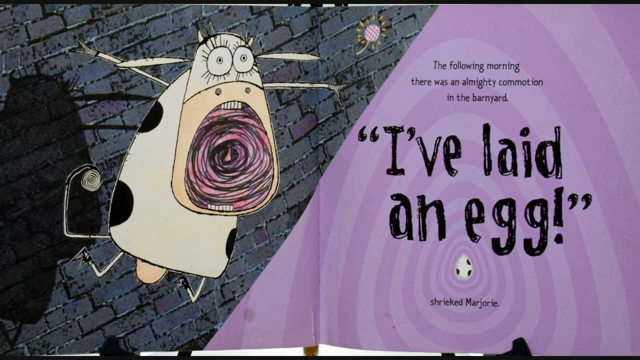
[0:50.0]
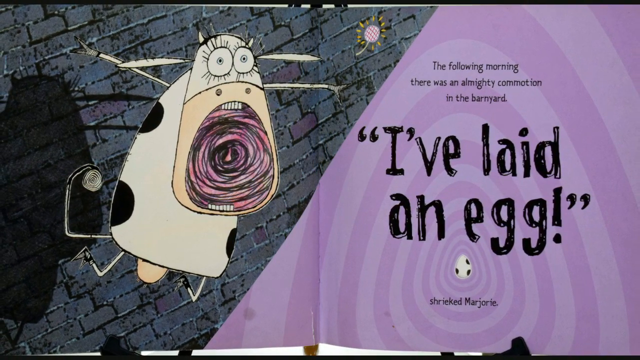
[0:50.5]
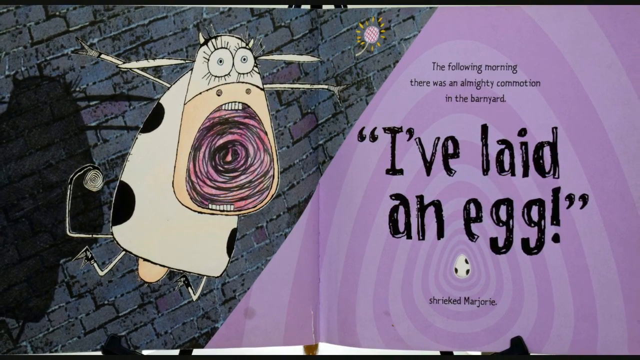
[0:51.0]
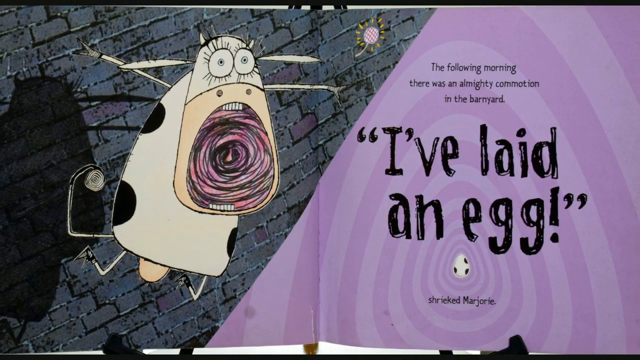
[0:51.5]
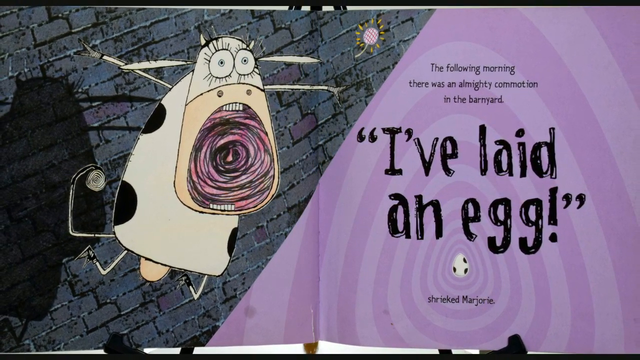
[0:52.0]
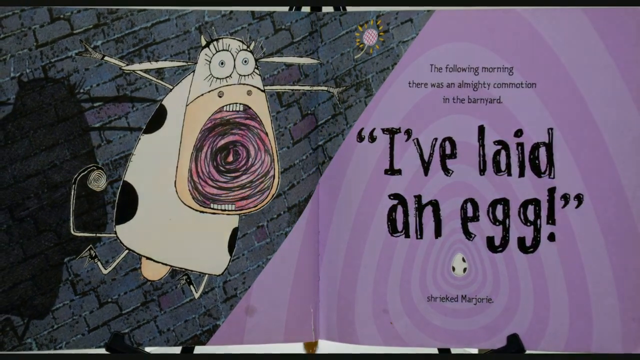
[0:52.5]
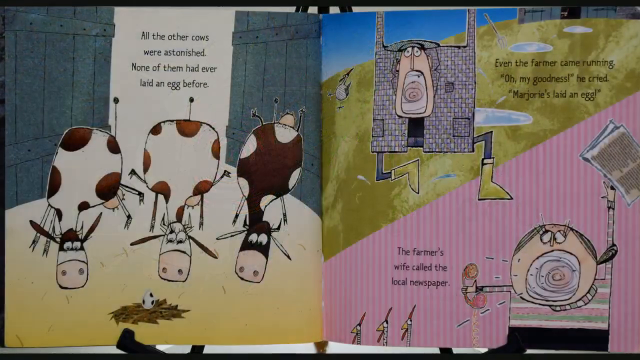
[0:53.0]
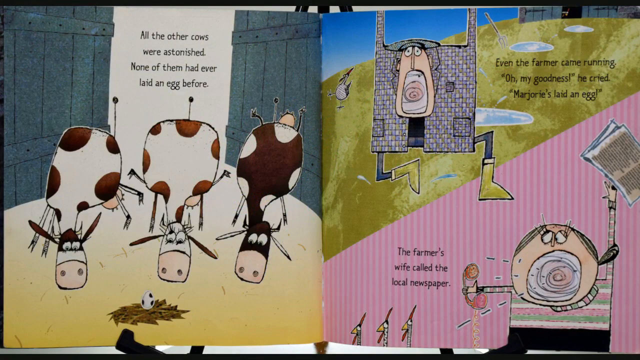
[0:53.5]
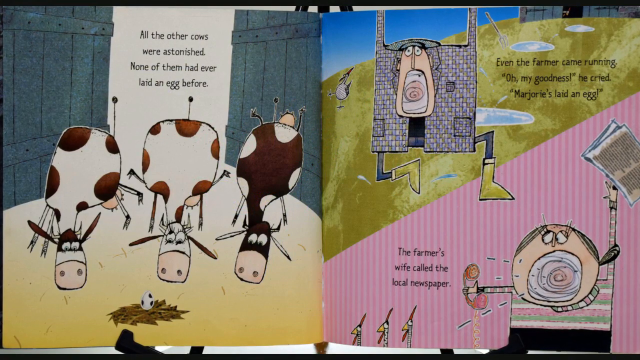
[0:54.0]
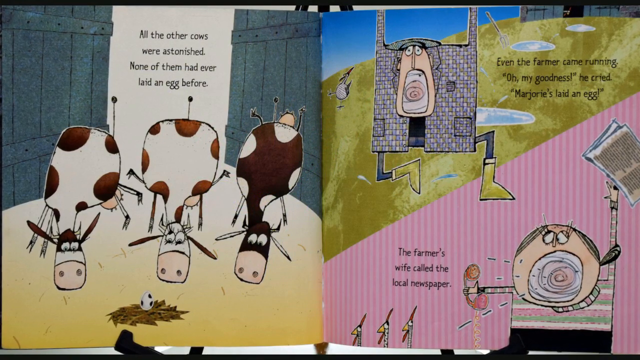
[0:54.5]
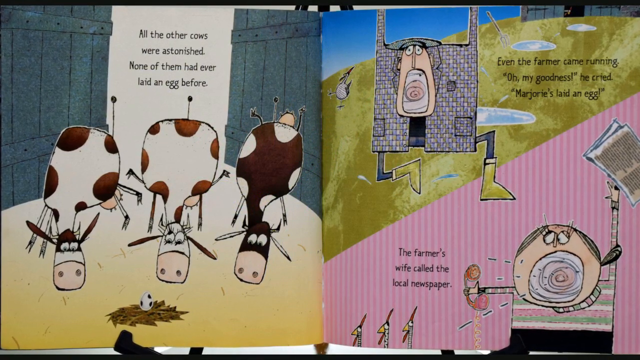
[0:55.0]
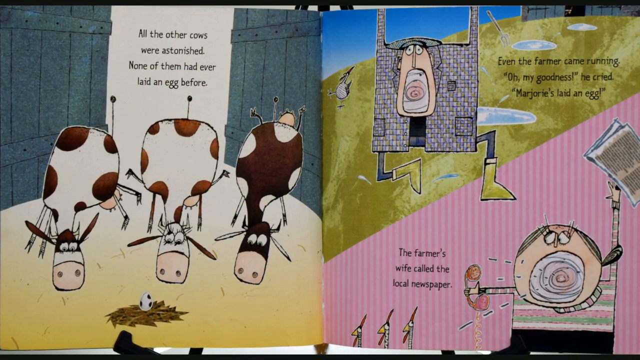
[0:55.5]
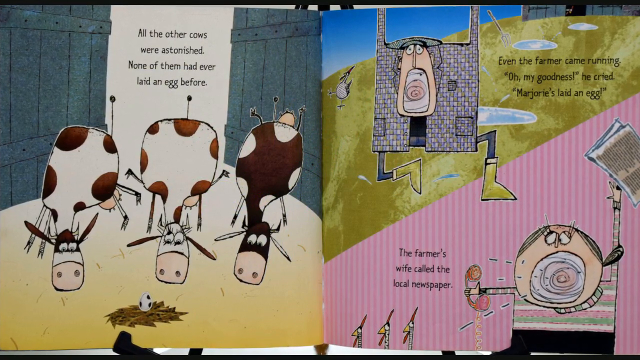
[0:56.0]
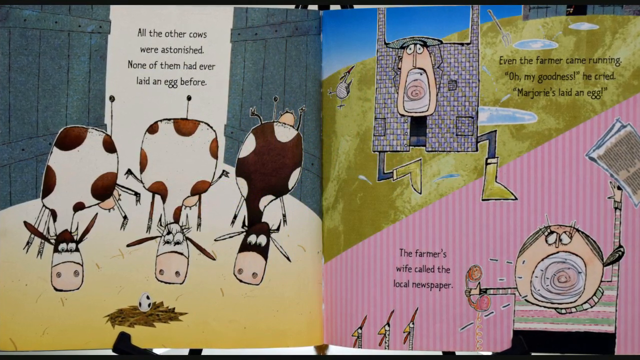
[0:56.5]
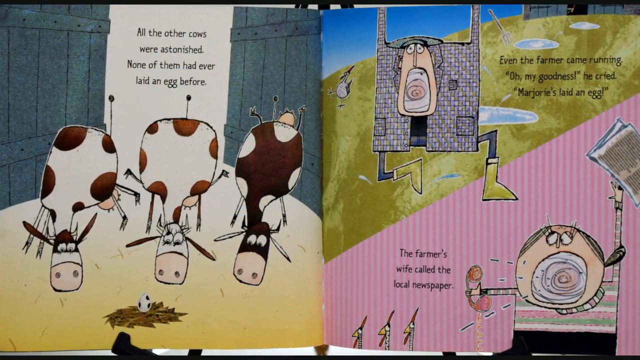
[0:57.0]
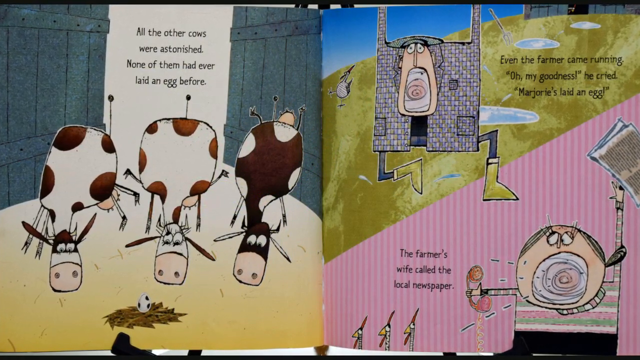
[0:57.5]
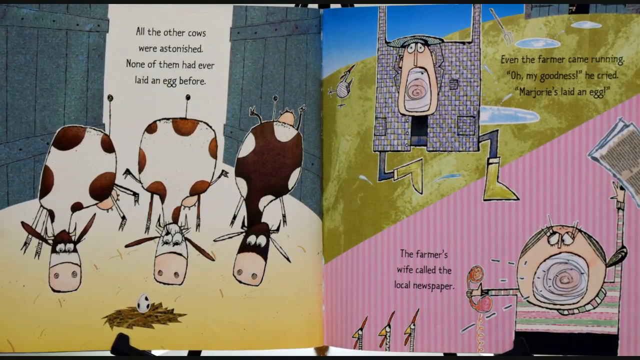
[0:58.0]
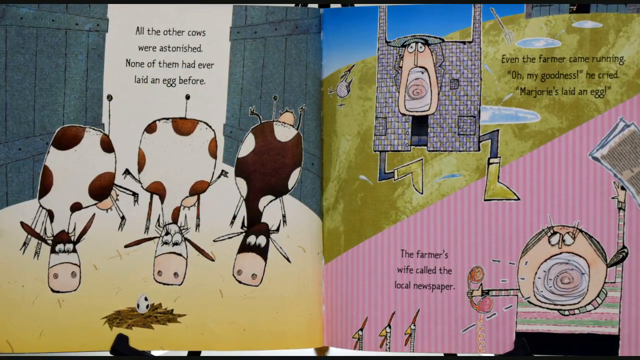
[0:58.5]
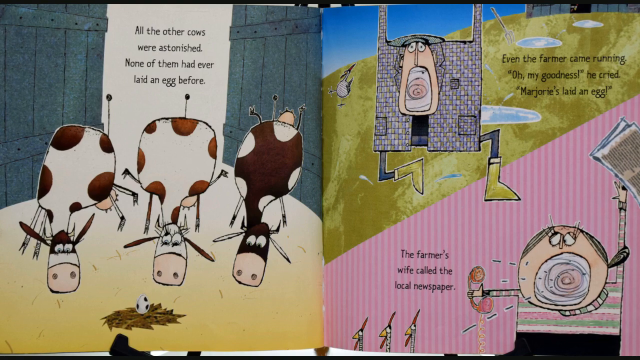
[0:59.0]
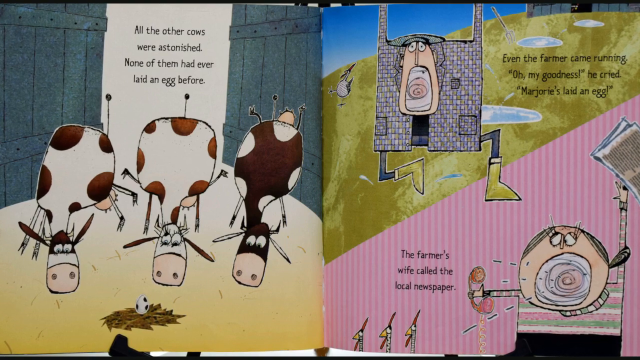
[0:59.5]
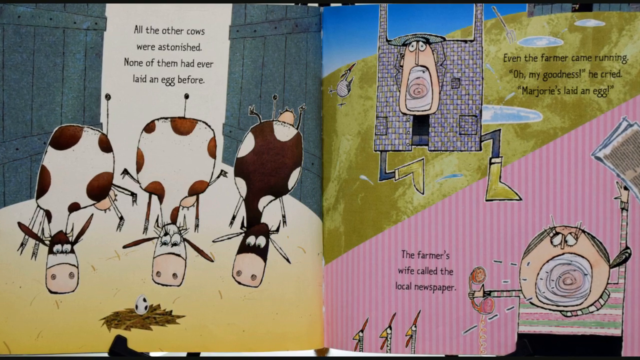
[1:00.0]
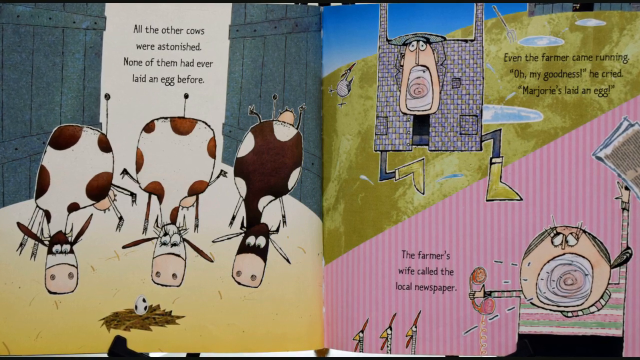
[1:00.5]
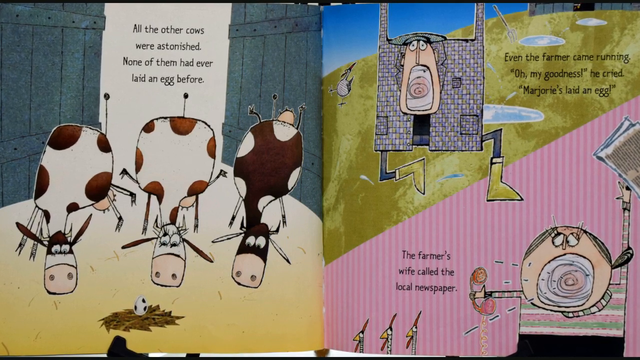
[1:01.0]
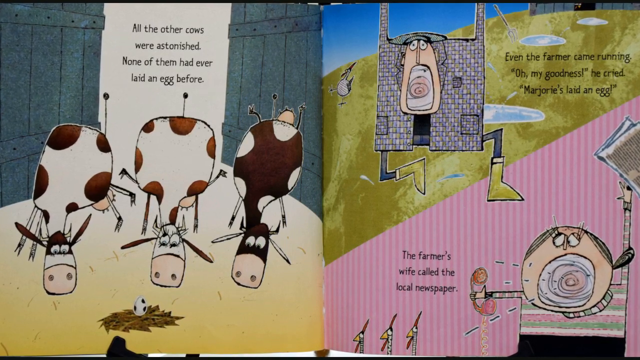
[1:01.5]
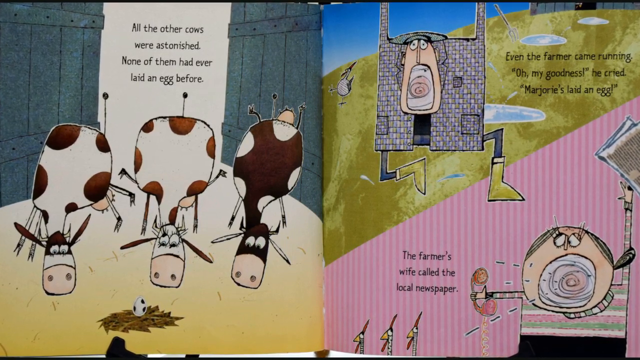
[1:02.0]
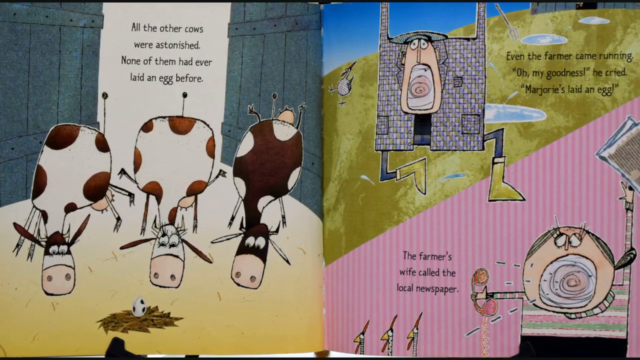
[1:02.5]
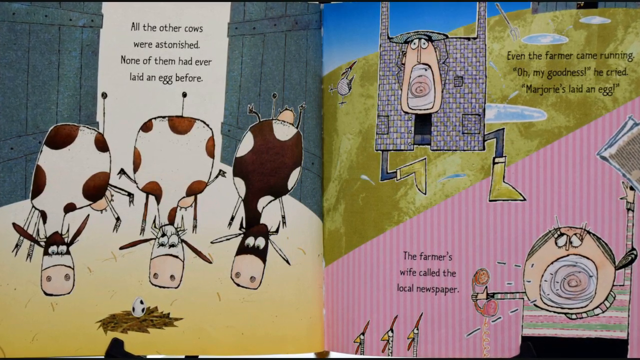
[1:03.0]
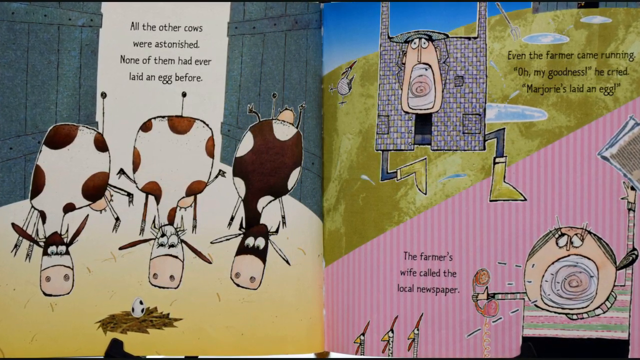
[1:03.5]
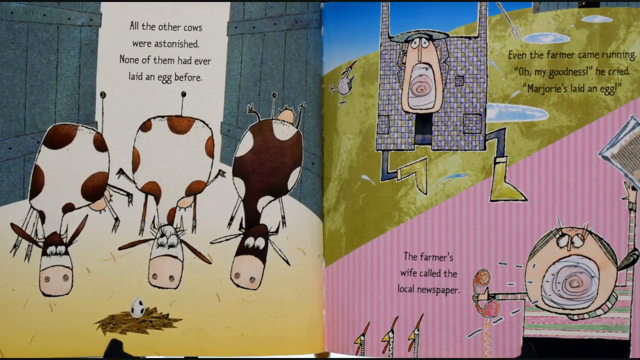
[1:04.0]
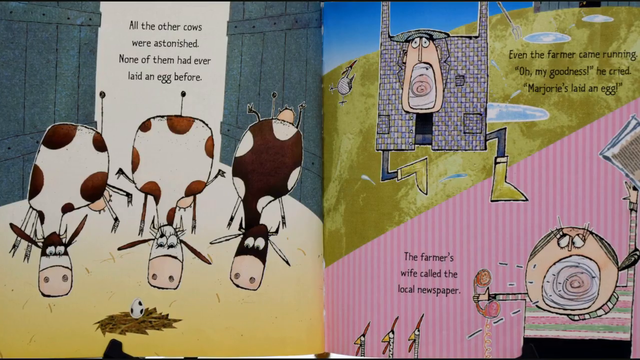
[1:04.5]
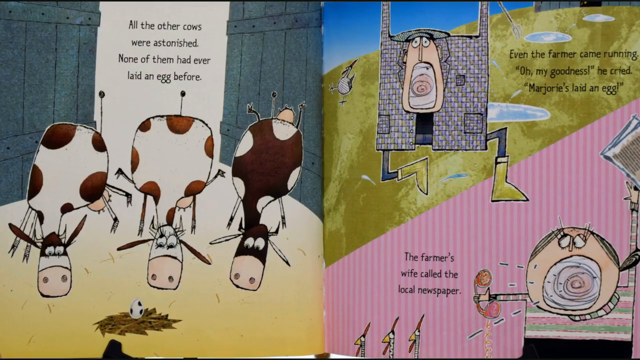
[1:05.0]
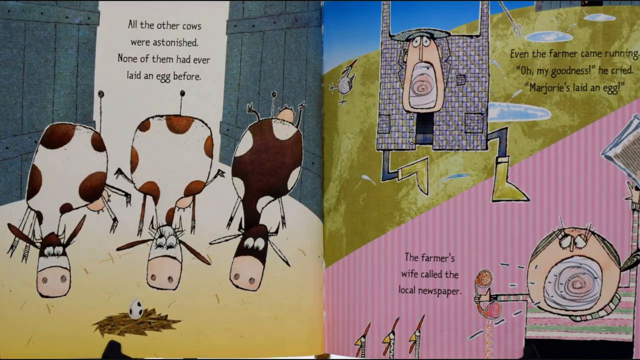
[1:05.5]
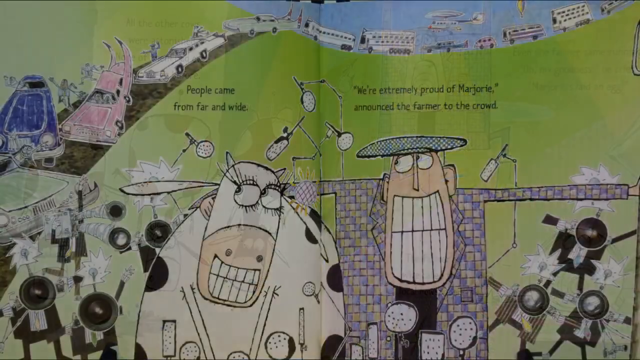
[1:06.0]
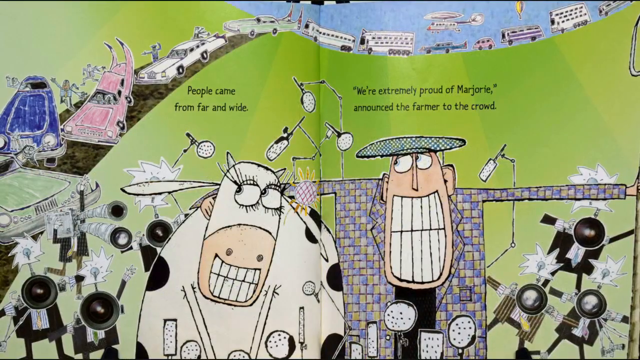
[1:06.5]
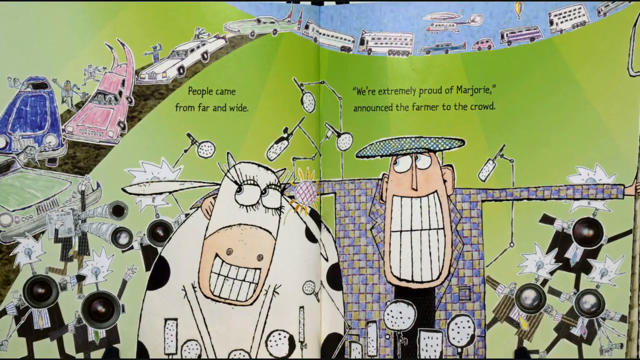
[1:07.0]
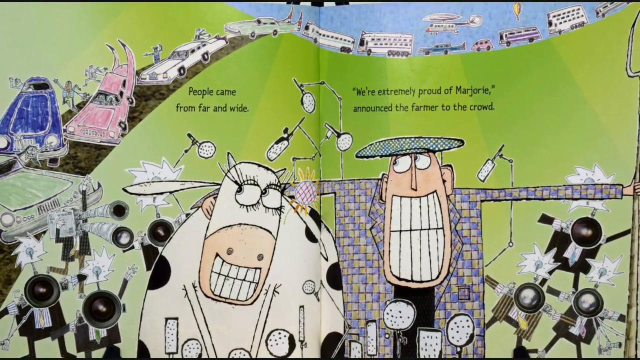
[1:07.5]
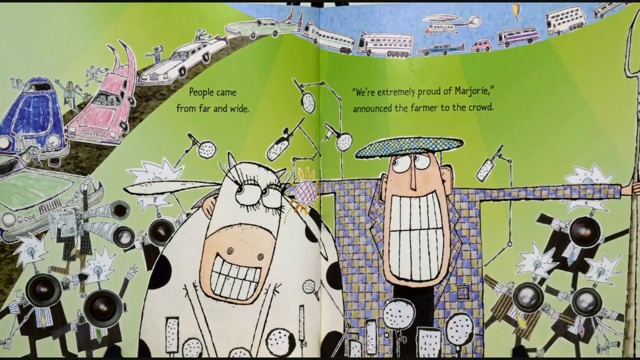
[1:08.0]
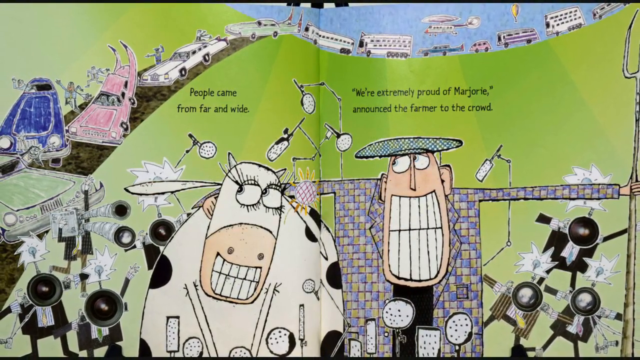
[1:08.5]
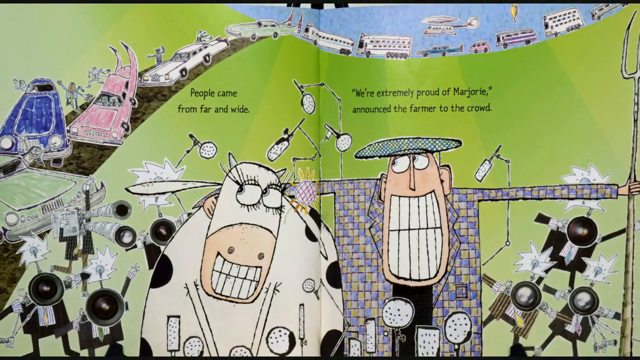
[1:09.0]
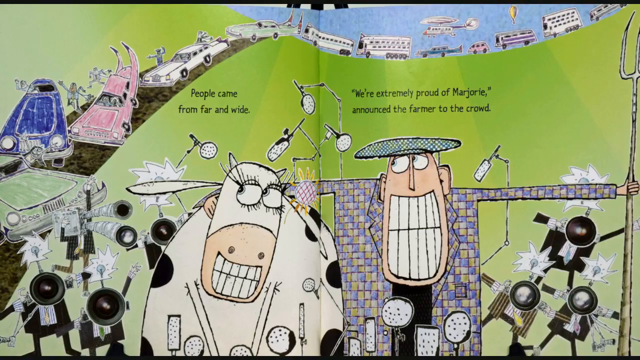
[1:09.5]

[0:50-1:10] The book about the cow named Marjorie, for whom the chickens hatched a plan to lay an egg, continues with the text "All the other cows were astonished. None of them had ever laid an egg before." The picture shows them all looking at a nest with a polka-dot egg in it. The next page, on the right, reads "Even the farmer came running. Oh my goodness, he cried. Marjorie's laid an egg. The farmer's wife called the local newspaper." Both pages show the farmer and the farmer's wife with huge mouths with a swirly circle in the middle, talking and in shock that their cow has laid an egg. Next, a whole line of people in their vehicles is on the roadway, with the text "People came from far and wide. We're extremely proud of Marjorie, announced the farmer to the crowd." The farmer is now dressed up in a plaid hat, with microphones all around his face, and he has a very large, proud smile.